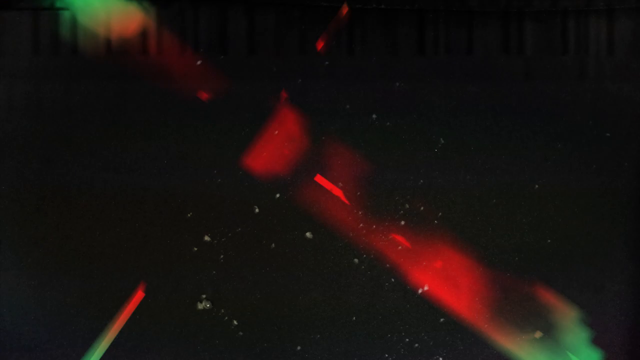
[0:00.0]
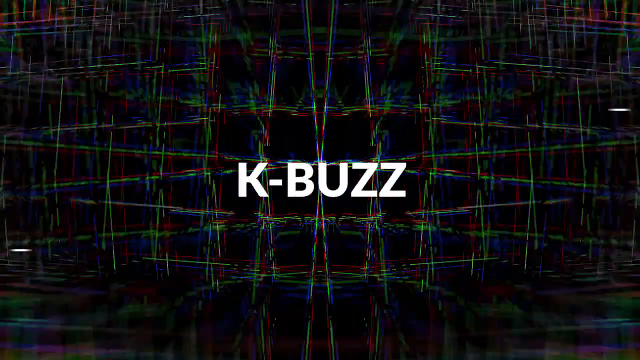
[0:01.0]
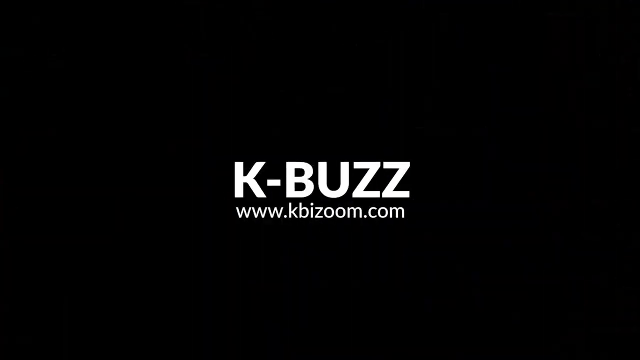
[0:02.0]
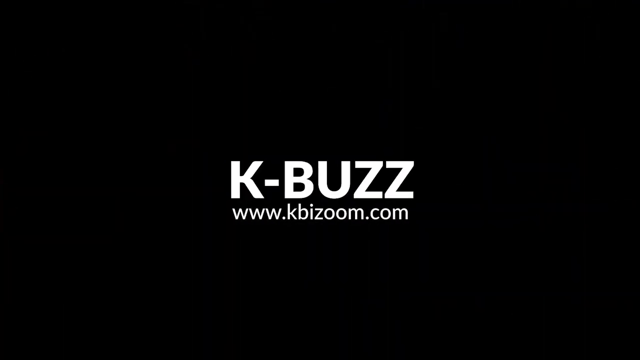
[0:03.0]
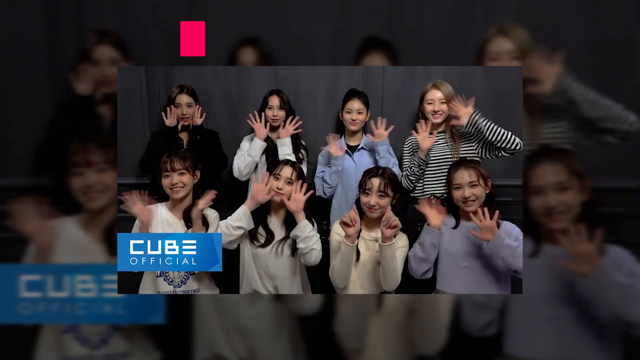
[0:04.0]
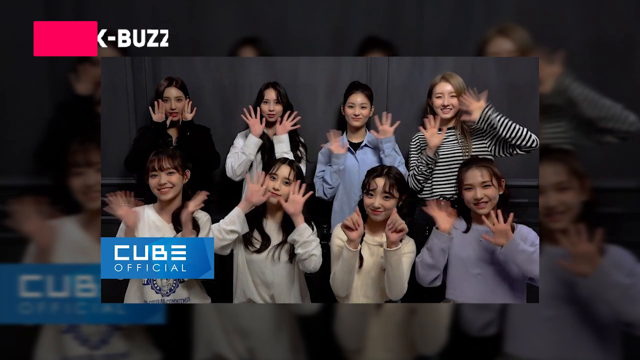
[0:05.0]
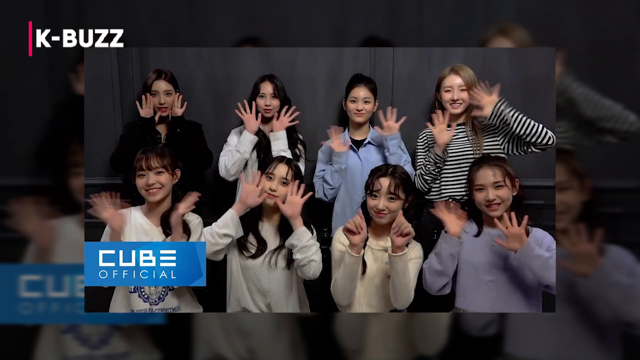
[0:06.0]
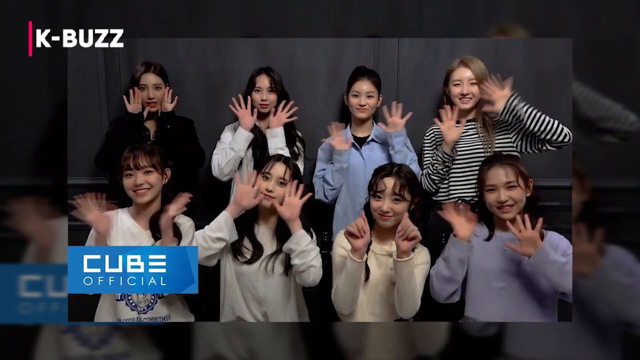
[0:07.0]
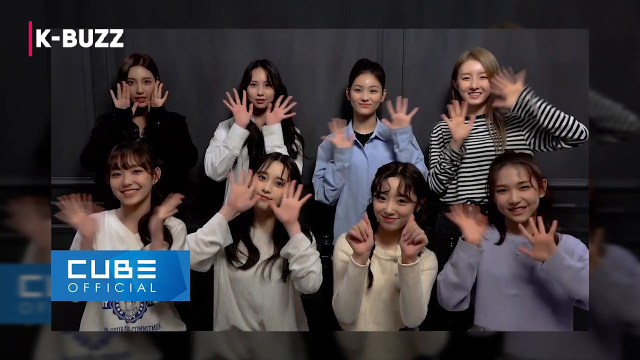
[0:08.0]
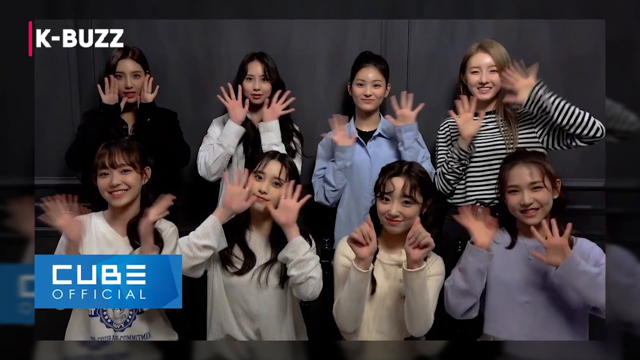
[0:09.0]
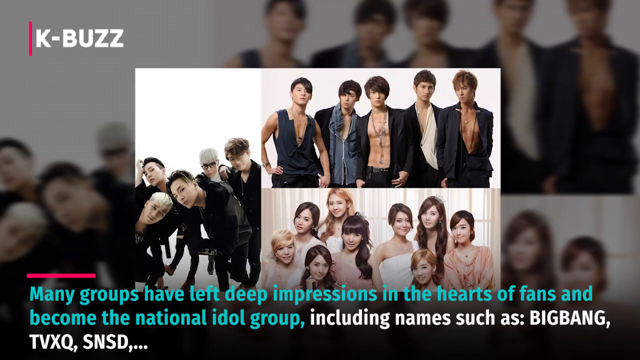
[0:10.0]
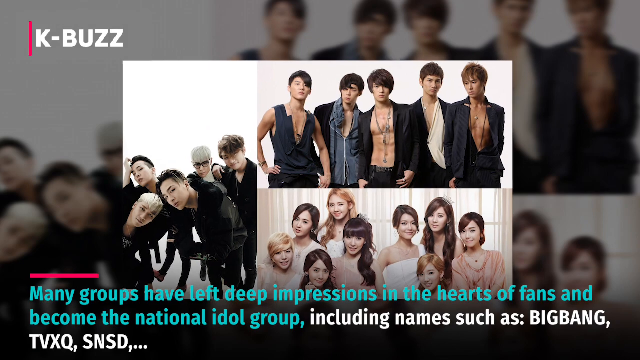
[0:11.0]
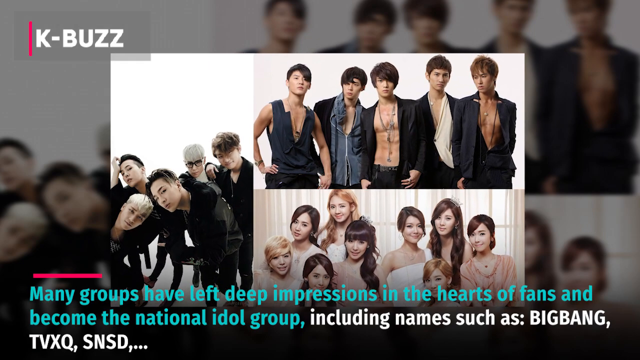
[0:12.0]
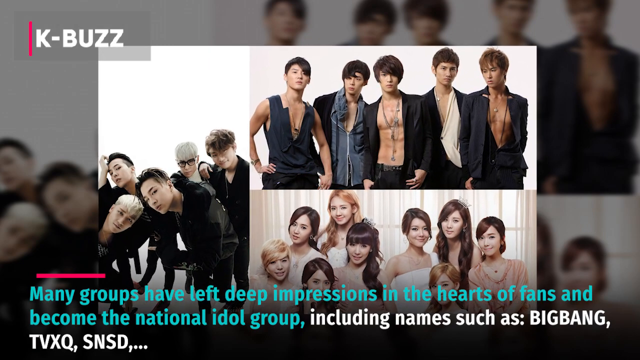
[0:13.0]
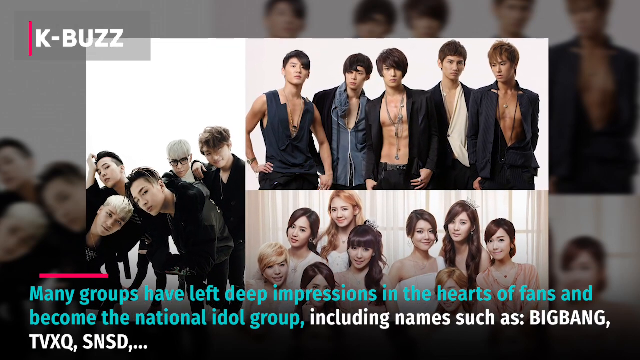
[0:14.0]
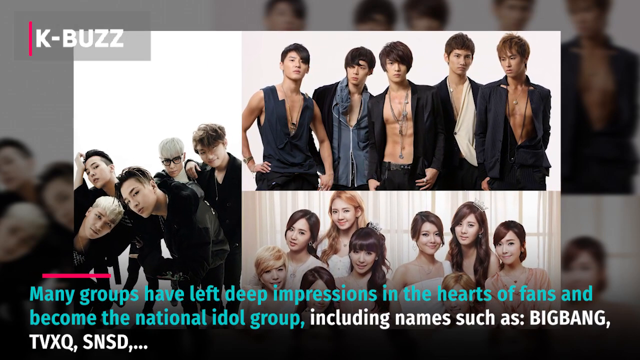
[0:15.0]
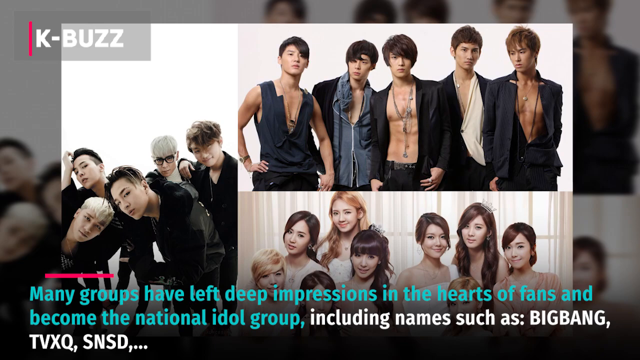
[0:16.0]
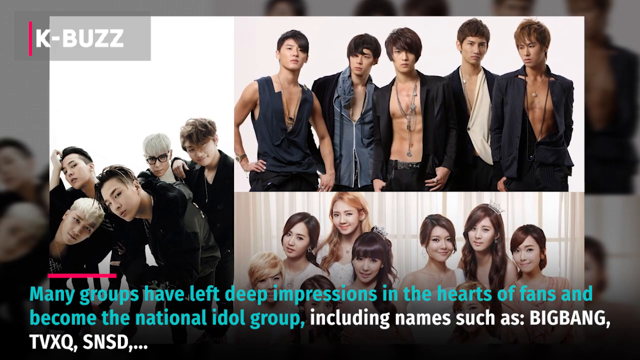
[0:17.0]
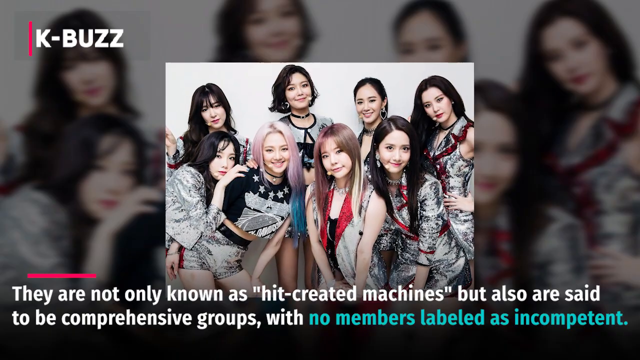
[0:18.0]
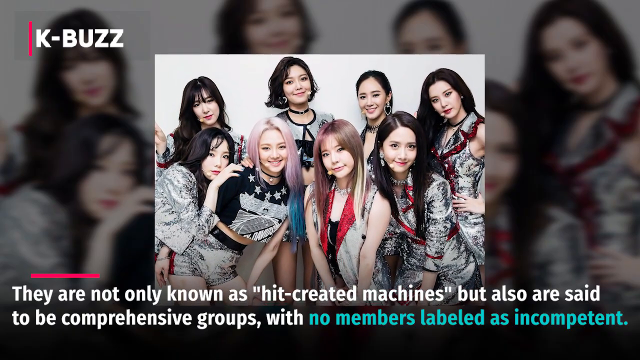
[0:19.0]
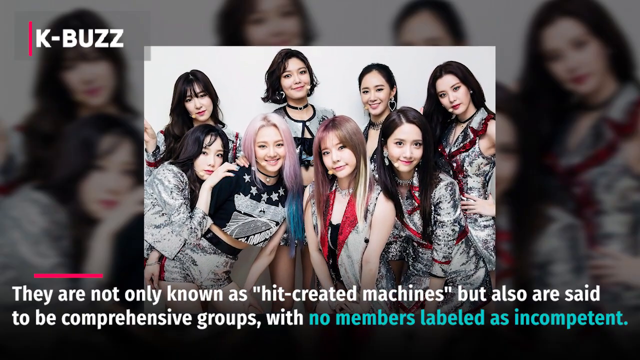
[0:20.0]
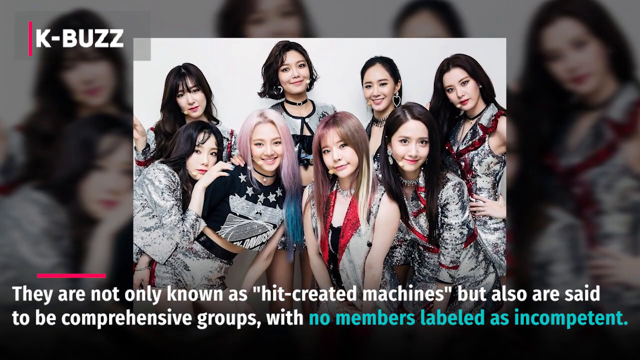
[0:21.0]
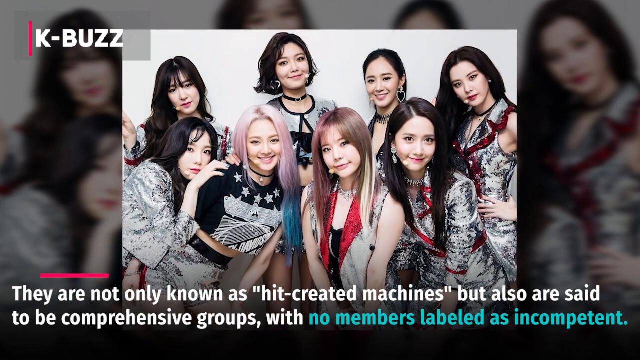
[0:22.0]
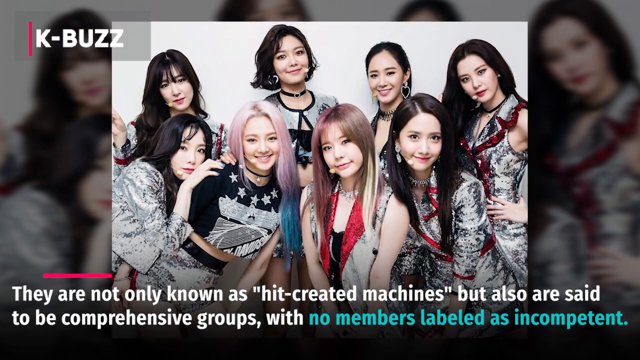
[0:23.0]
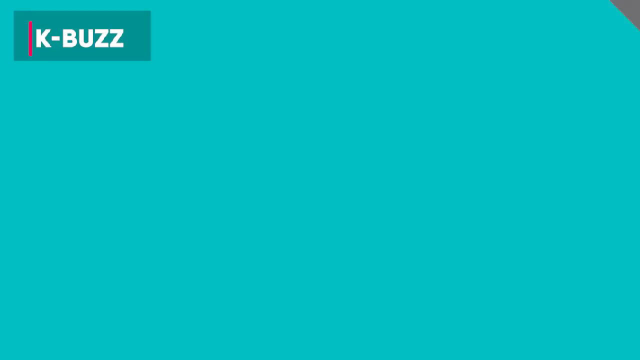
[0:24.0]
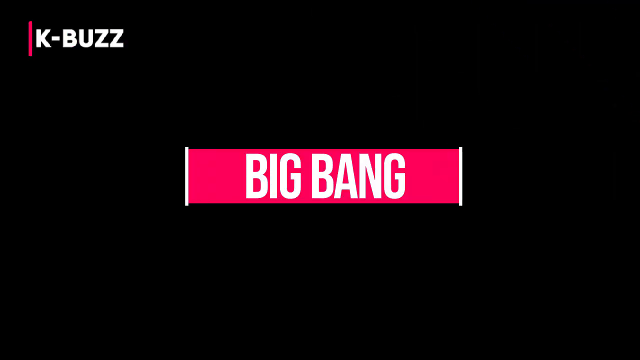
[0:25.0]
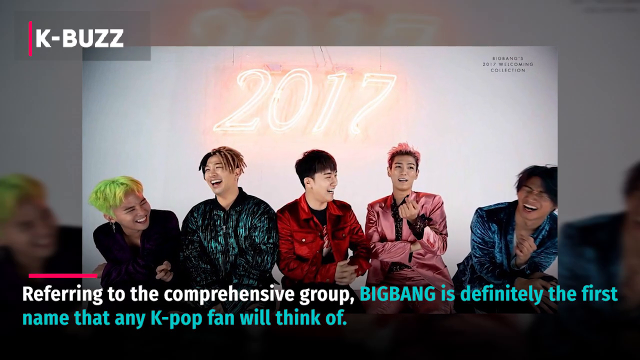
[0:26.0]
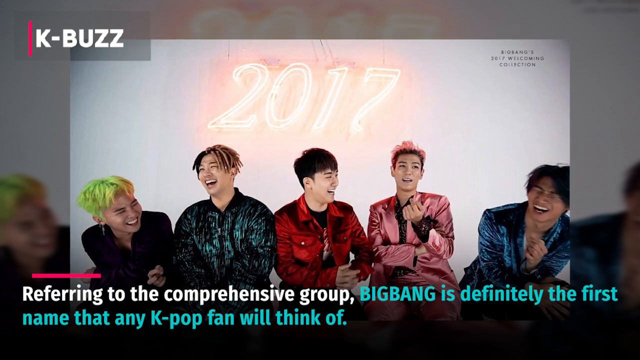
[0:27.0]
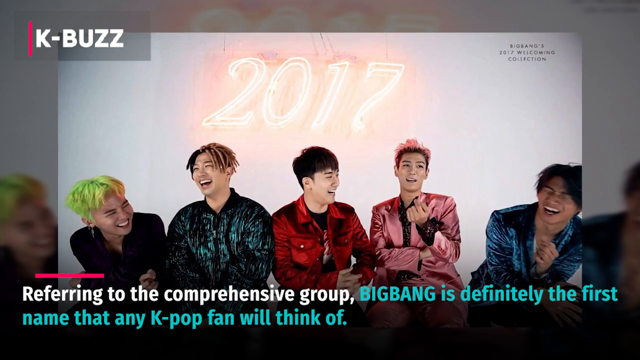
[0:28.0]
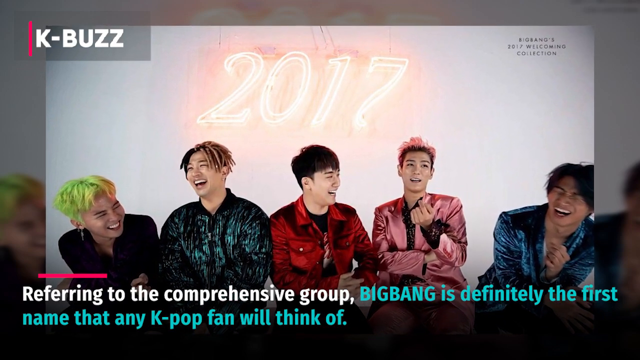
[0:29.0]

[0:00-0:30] The video opens with a glitchy effect, and the words "KBuzz" appear underneath a website, "www.kbizzoom.com". This fades out to a photo of eight young women waving and smiling at the camera, with "KBuzz" at the top left. At the bottom left of the picture, not the frame, is a blue rectangle with the words "Cube Official" in white. The eight young women appear to be a K-pop girl band. Next come three pictures of three different K-pop groups: on the left, a vertical picture of five men takes up one third of the frame, and on the right are two pictures, top and bottom, with five men in the top one and nine women in the bottom right one. Green text at the bottom of the screen reads "many groups have left deep impressions in the hearts of fans and become the national idol group", followed in white by "including names such as Big Bang, TVXQ, SNSD". Another photo of eight young women comes up, with white text underneath reading "they are not only known as hit created machines, but also are said to be comprehensive groups", followed in green by "no members labeled as incompetent". A green transition sweeps across the screen from bottom left to top right, and the first group, Big Bang, is introduced: the name appears in white letters on a red banner covering the center of the frame. A group of five young men is shown, with "2017" on the wall above them. Underneath, a white caption refers to the comprehensive group, followed in green by "Big Bang is definitely the first name that any K-pop fan will think of."